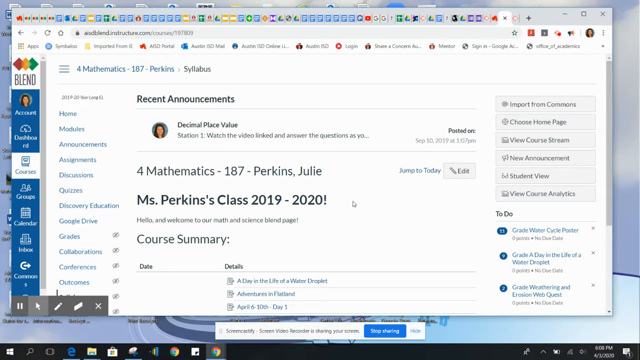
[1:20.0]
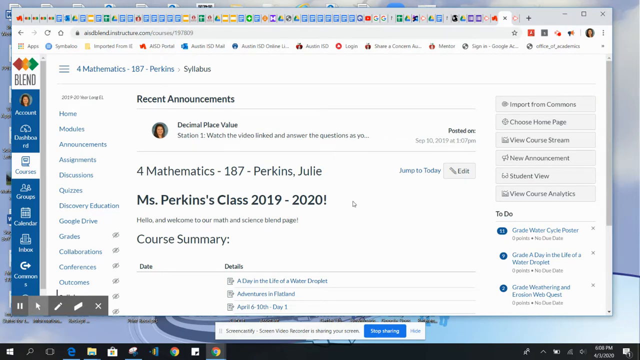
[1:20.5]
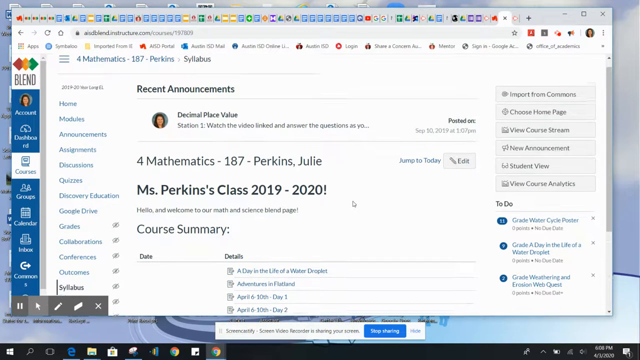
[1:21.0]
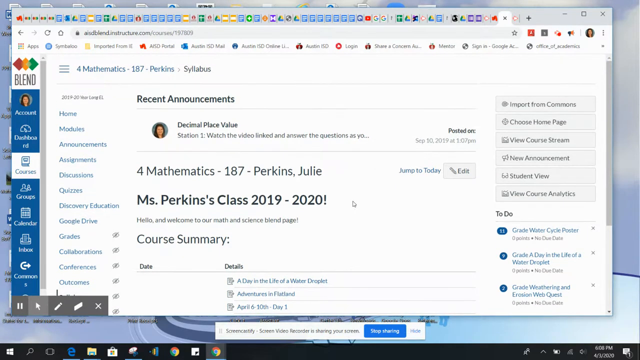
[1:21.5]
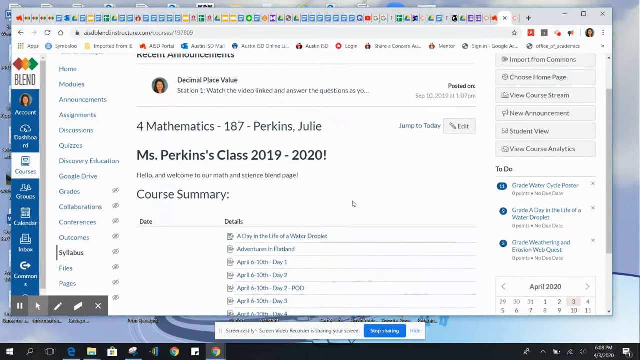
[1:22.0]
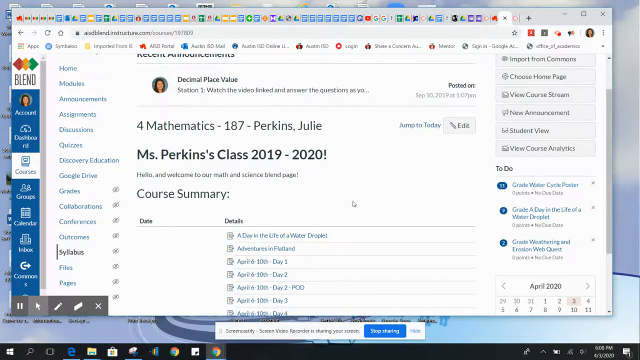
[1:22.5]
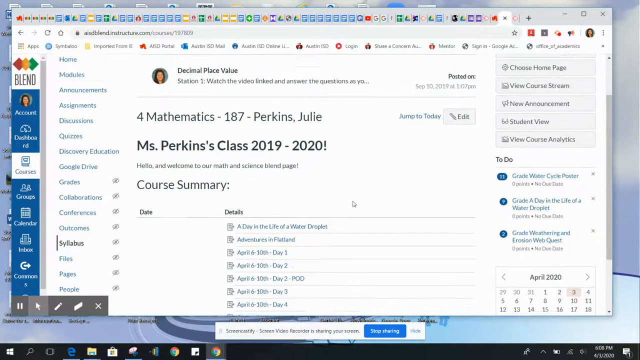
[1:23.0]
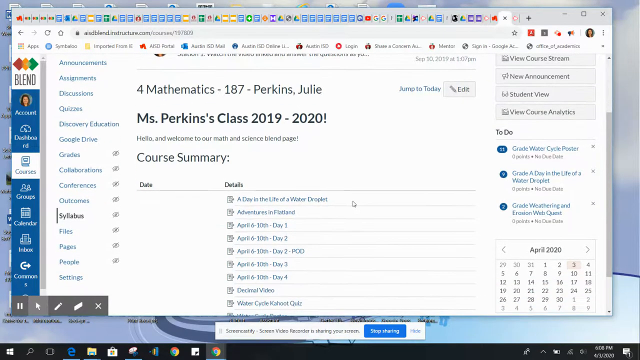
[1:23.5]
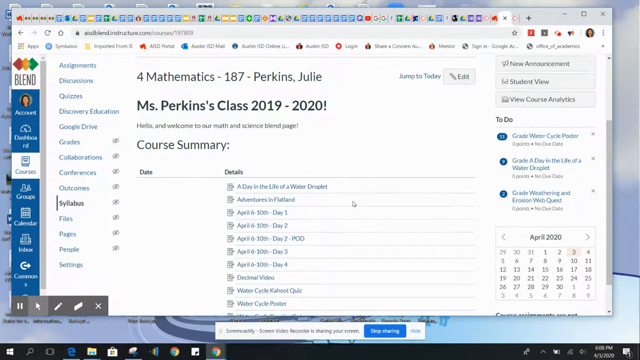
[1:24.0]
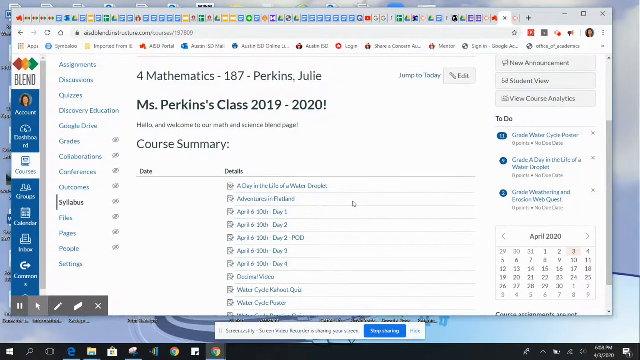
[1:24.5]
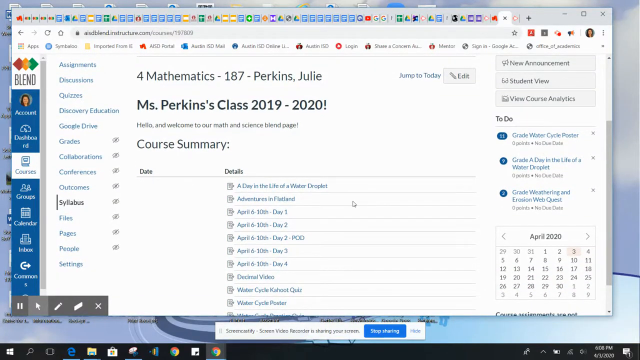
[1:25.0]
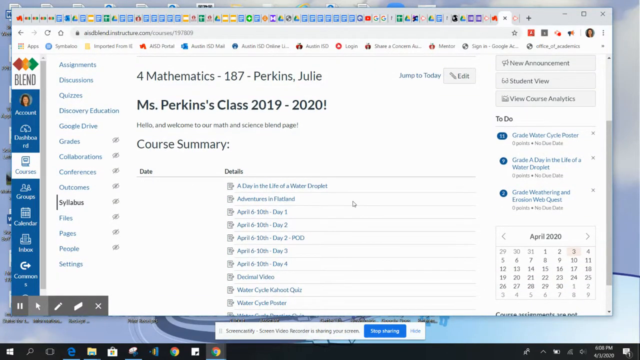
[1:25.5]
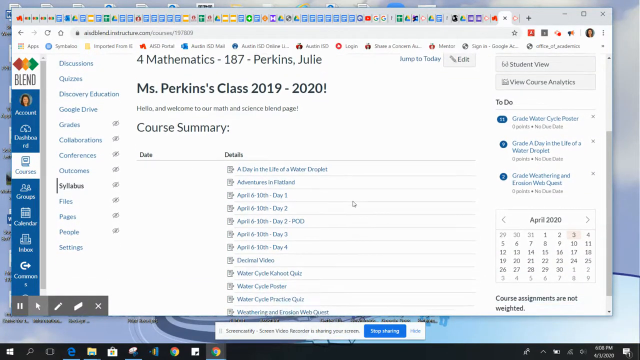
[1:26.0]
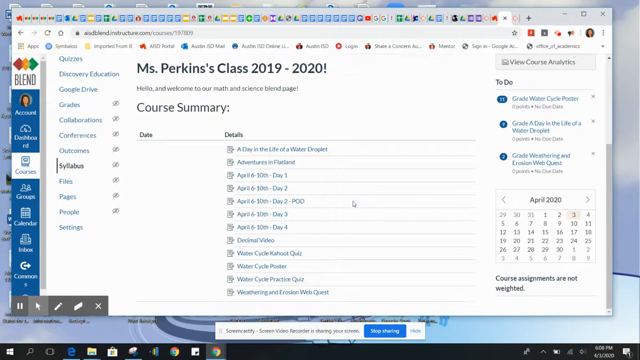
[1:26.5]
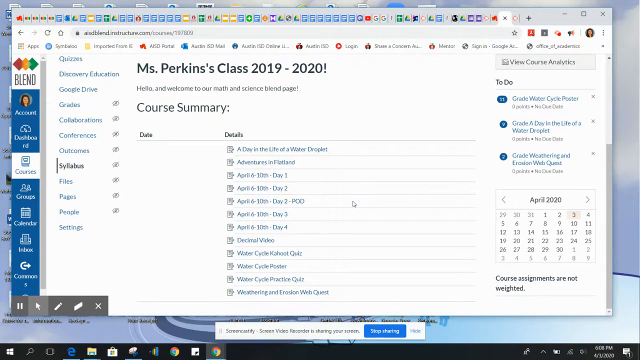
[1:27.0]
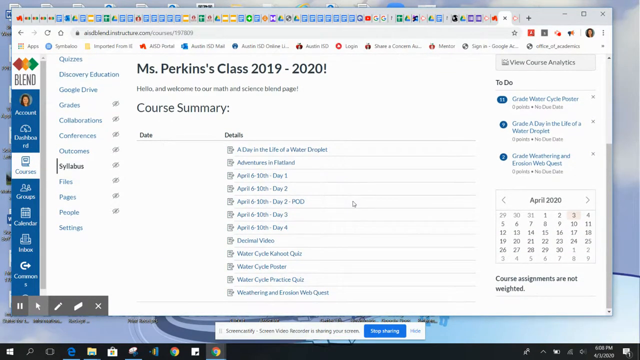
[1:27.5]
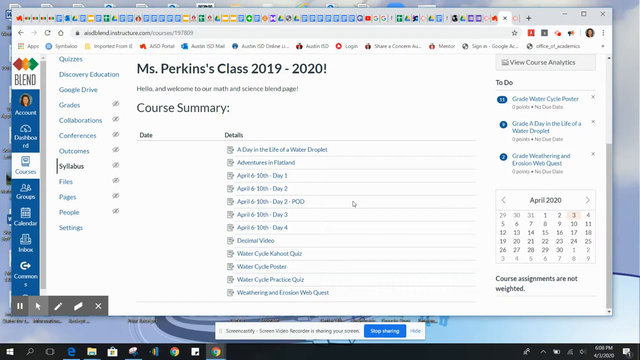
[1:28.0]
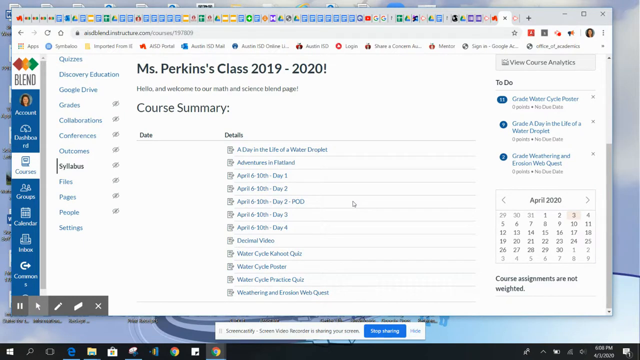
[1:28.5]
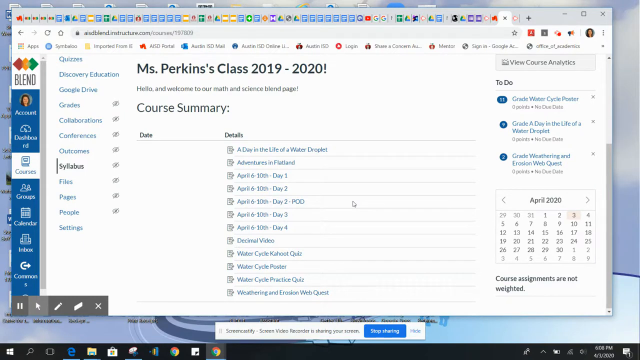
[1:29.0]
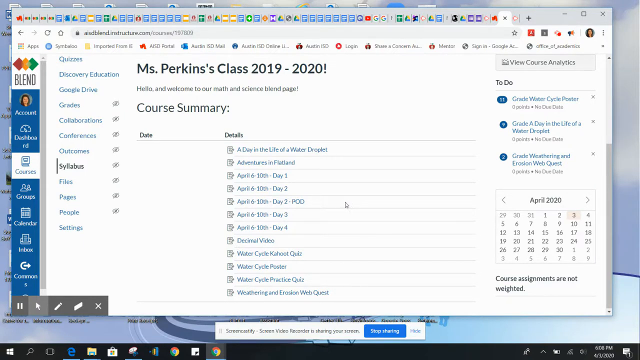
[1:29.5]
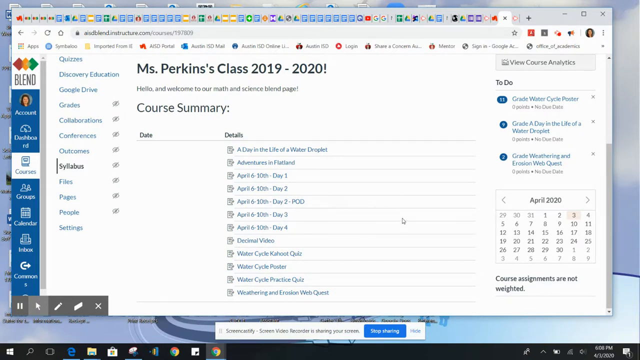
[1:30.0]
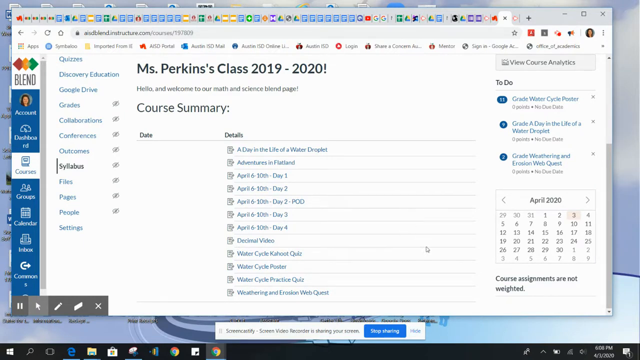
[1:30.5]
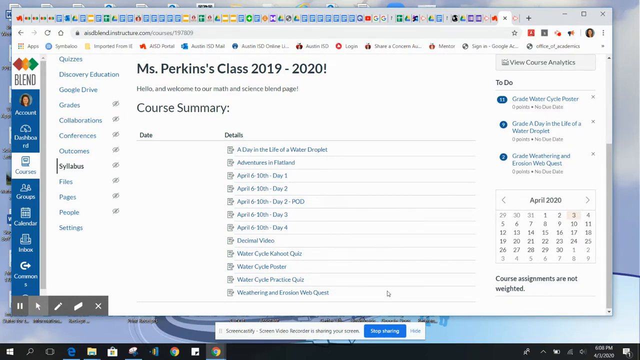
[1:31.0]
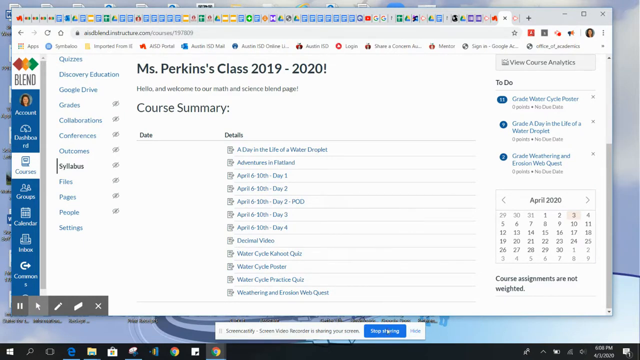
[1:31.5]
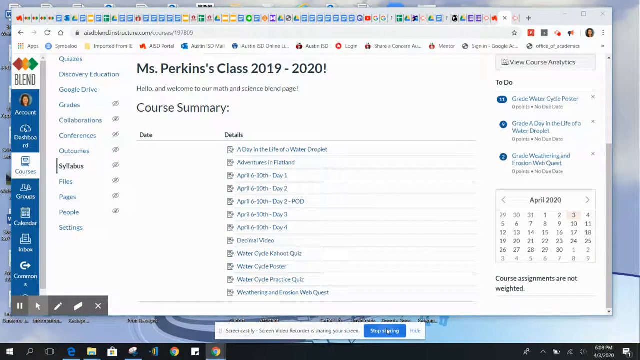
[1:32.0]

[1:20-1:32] The page for Ms. Perkins' 2019-2020 mathematics class is still shown. The user scrolls down, revealing many documents; most say "April 6th and 10th-Day 1", and there are also Day 2, Day 3, and Day 4, plus two other documents called "Adventures in Flatland" and "A Day in the Life of a Water Droplet". Scrolling further shows more items such as a decimal video and water cycle posters, with 12 documents visible in total. At the bottom right there is a calendar that says "course assignments are not weighted"; it shows April 3rd 2020 and spans from March 29th up until May 9th. This is probably where the courses and their due dates appear. Nothing has a due date yet, so it looks like the course is being prepared for a new semester.